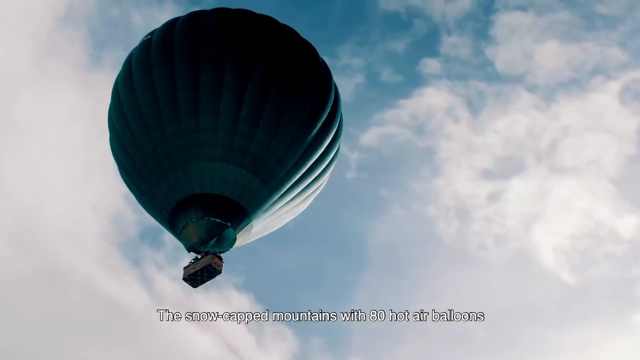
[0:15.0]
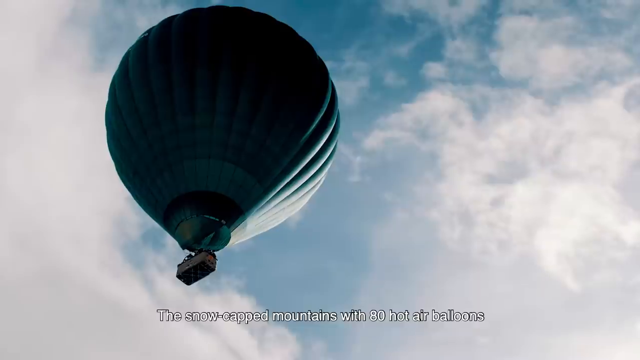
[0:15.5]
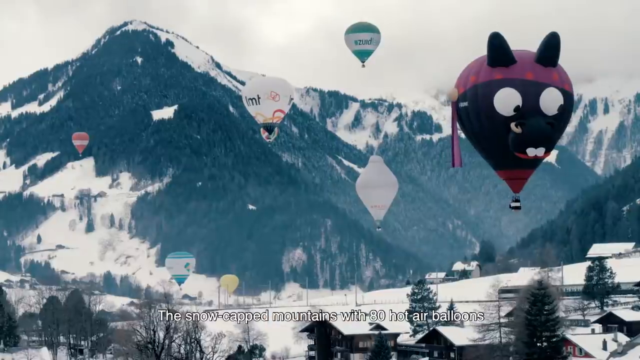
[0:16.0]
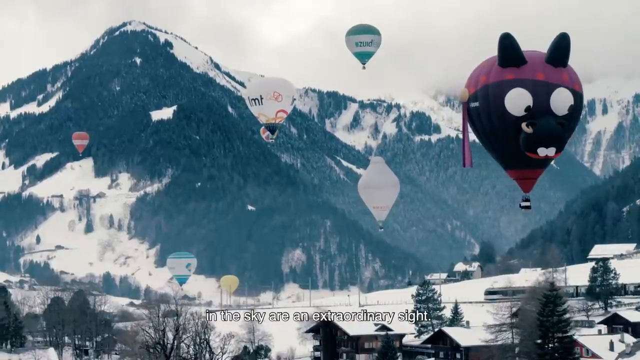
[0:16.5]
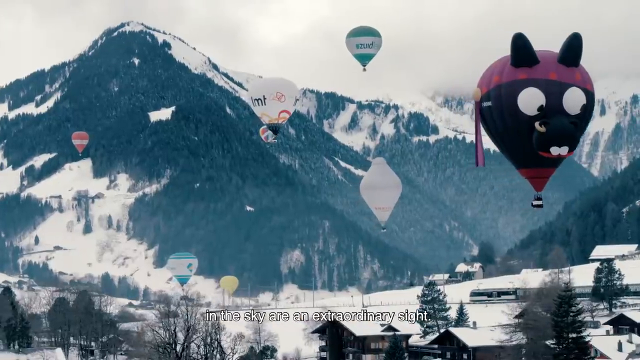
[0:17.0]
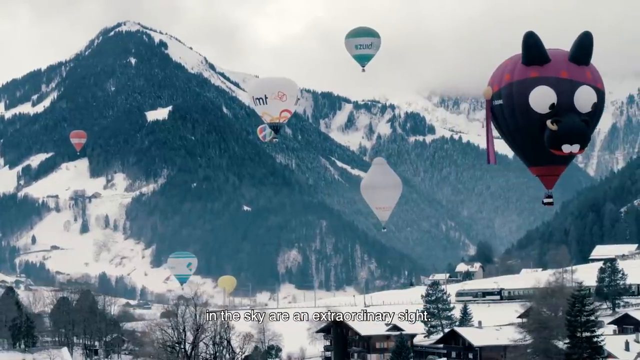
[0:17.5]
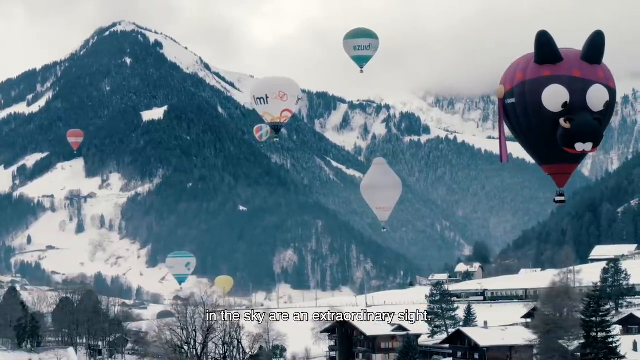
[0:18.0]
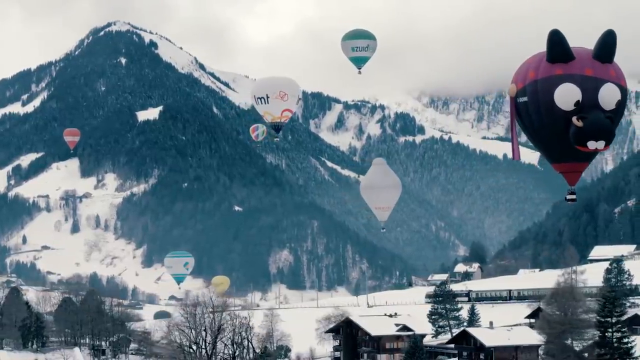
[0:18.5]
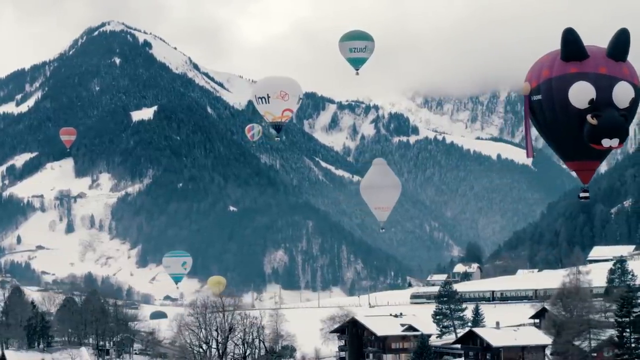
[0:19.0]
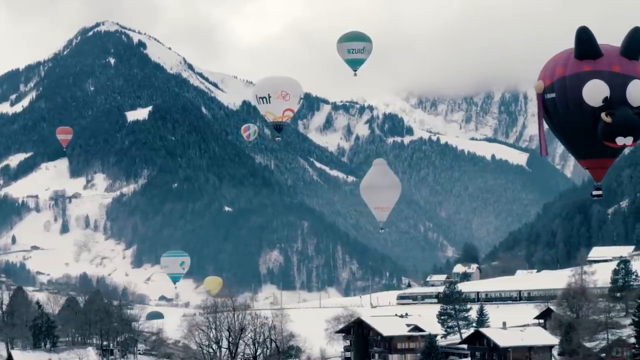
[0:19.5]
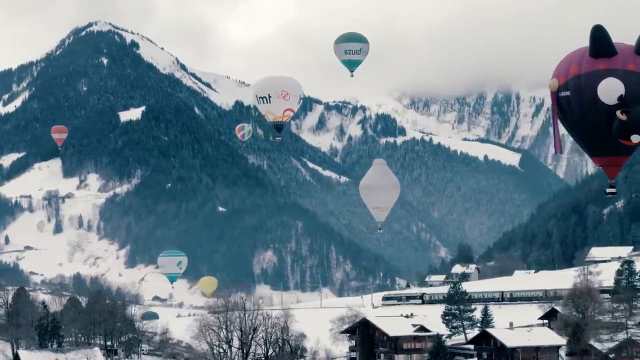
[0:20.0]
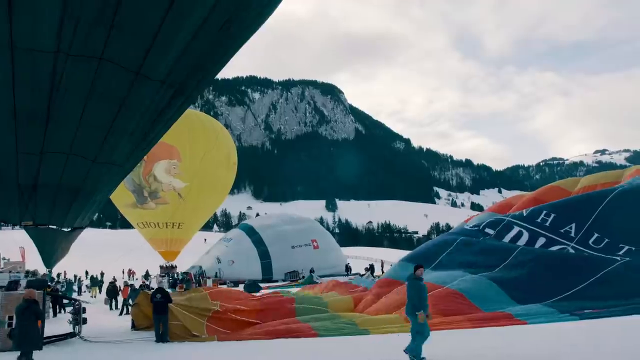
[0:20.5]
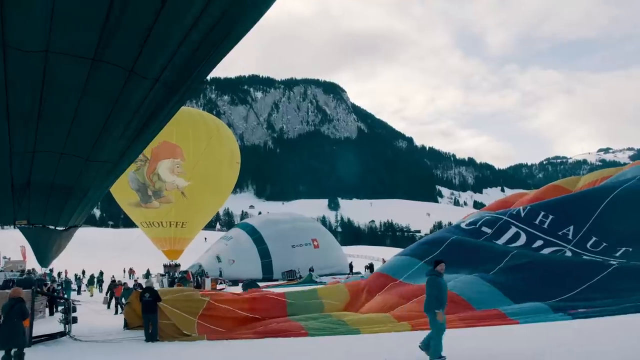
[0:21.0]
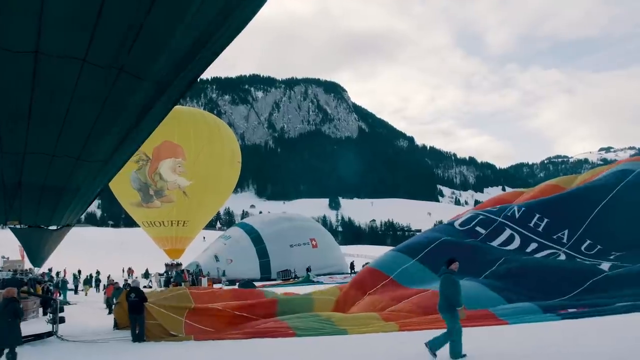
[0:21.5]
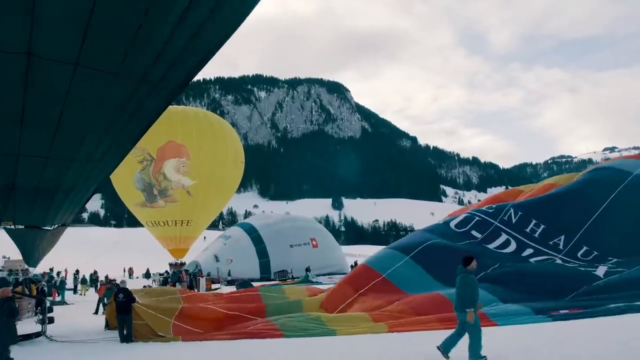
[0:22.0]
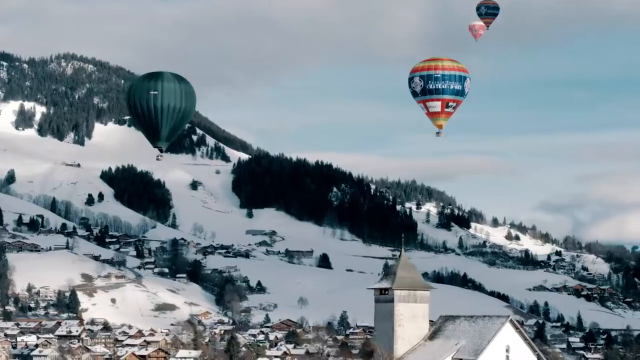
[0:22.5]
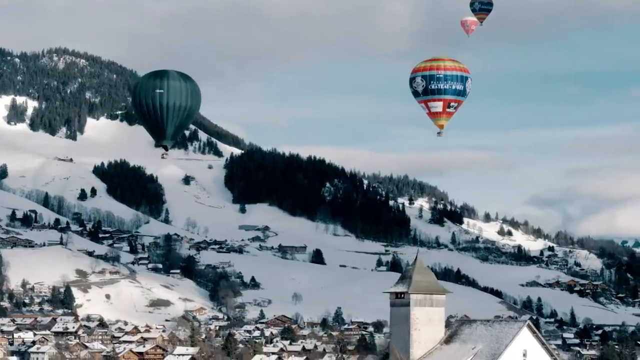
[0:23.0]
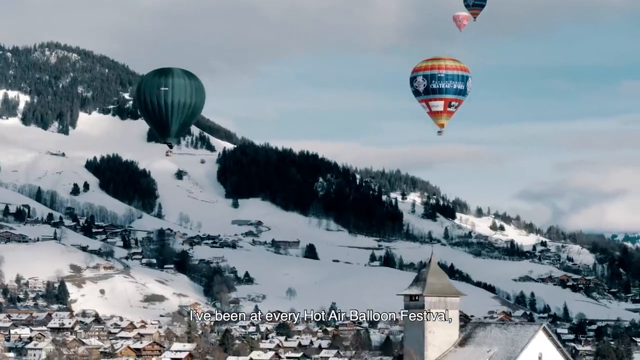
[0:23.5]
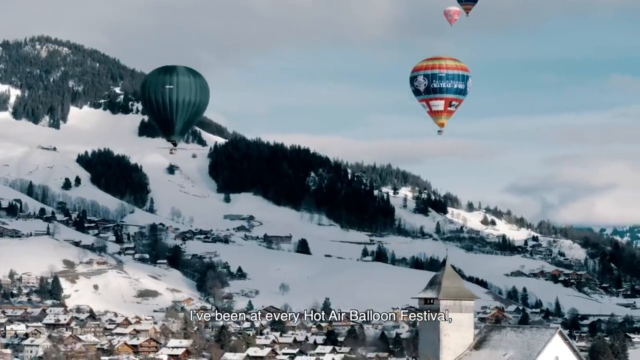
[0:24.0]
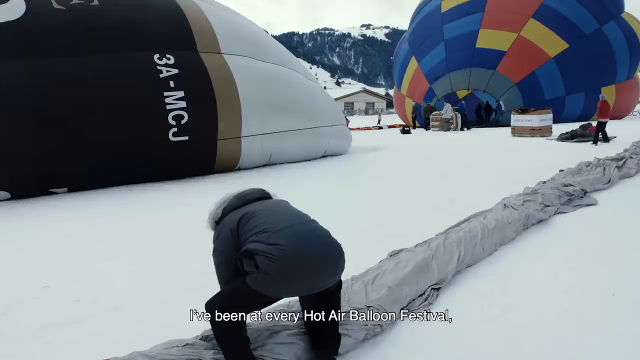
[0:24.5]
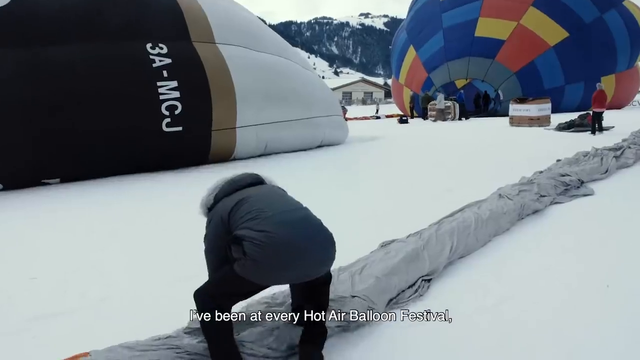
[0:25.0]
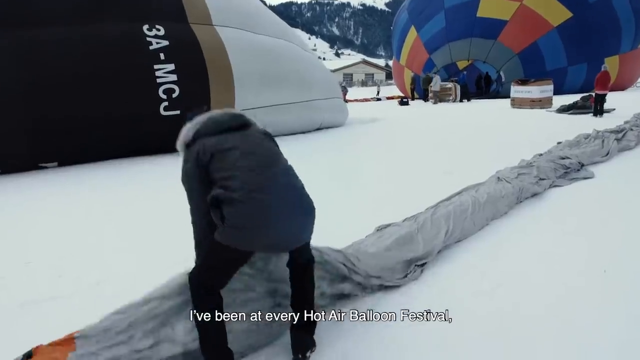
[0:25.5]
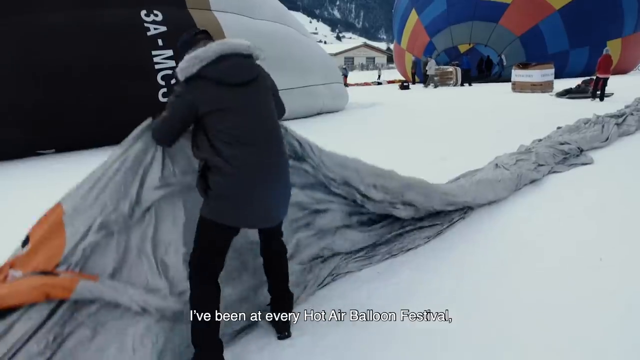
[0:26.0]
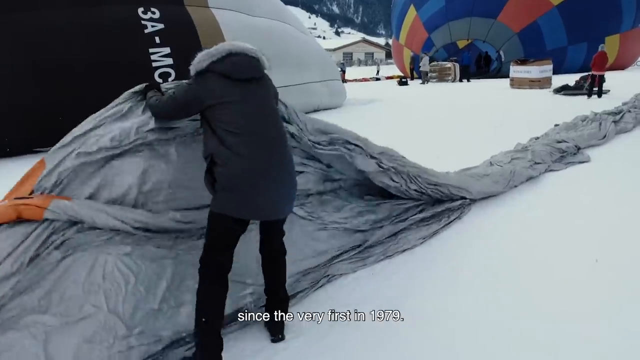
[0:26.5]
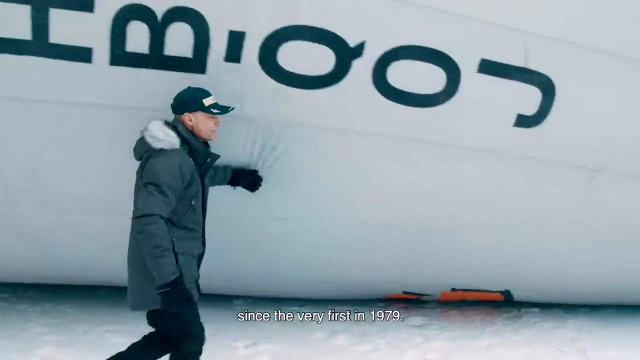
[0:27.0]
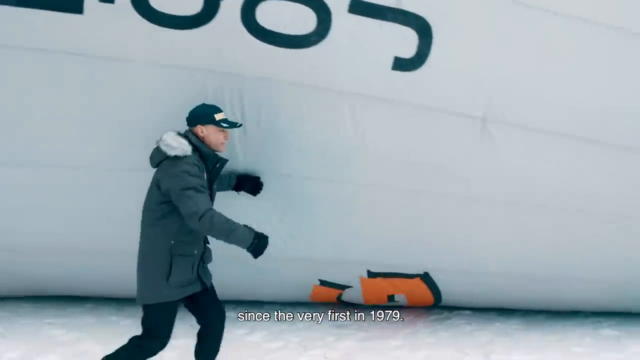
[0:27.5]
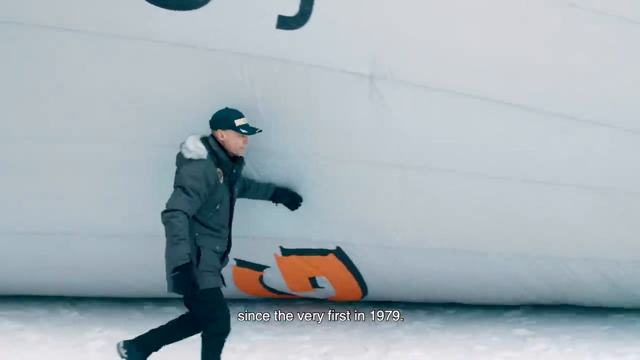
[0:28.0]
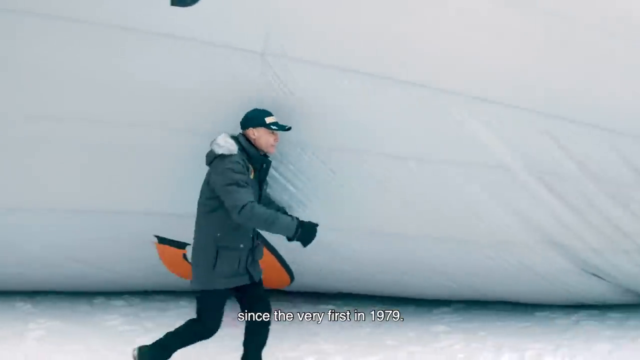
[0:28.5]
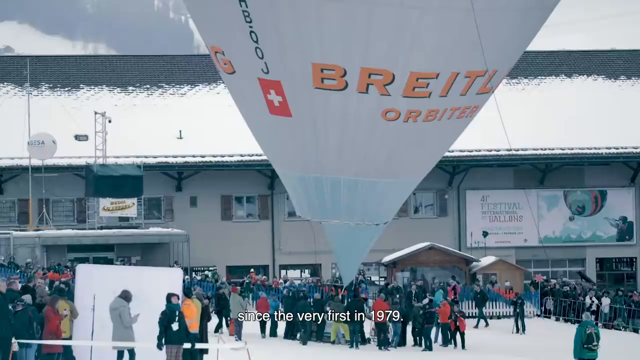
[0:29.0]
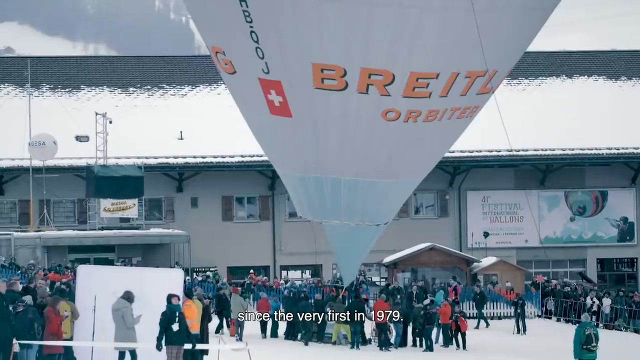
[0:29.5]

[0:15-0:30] A large turquoise hot air balloon is mid-air, by itself. As the camera shifts outwards, tall mountains come into view that look like they are in the clouds. Trees, maybe pine trees, line the mountains, mixed with a lot of snow, cliffs and cloudy air. Hot air balloons, around six or seven of them, float around in different colors; some are solid, and one has a face with cat ears and seems to be black. At the bottom of the screen, an express train runs through the center of the town, which almost looks like a Christmas town or a tourist spot. At the end, many people are picking up deflated balloons.